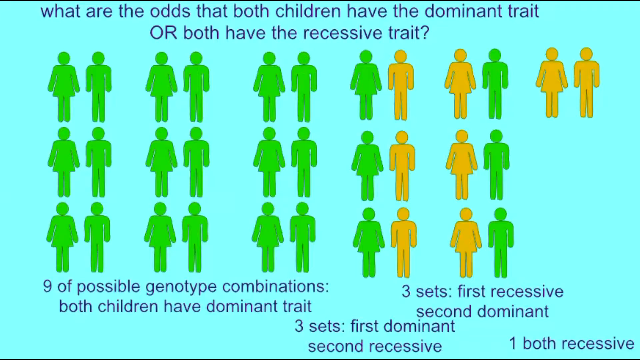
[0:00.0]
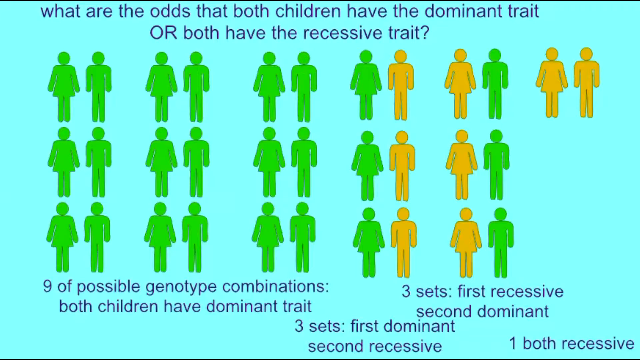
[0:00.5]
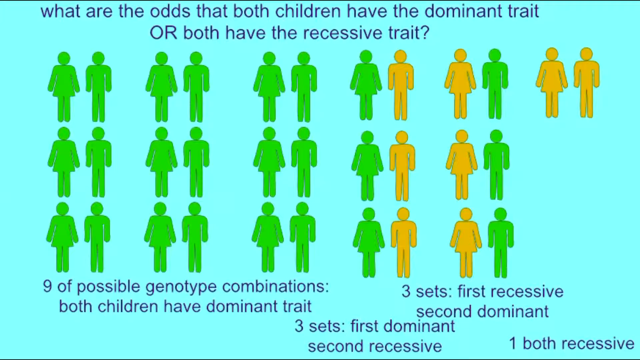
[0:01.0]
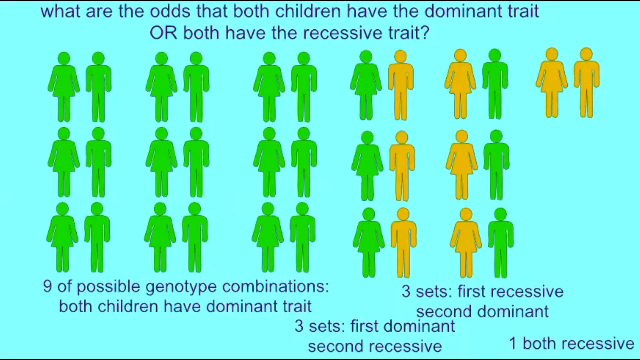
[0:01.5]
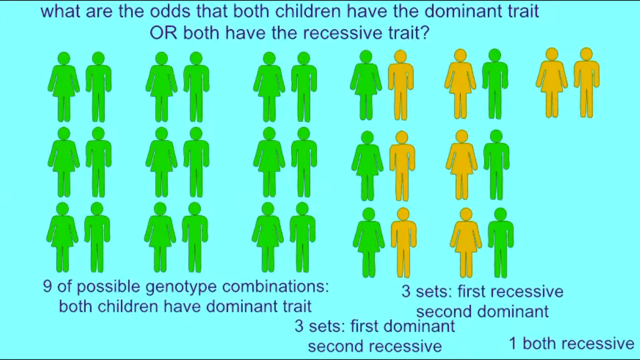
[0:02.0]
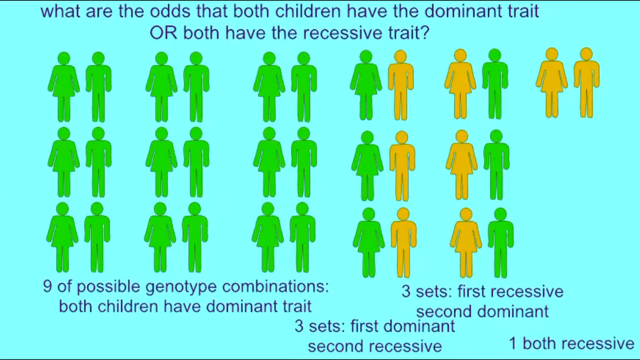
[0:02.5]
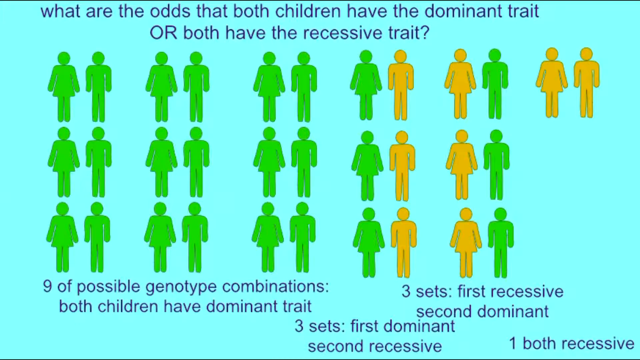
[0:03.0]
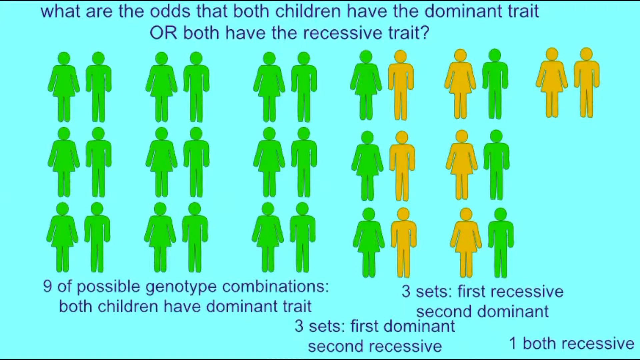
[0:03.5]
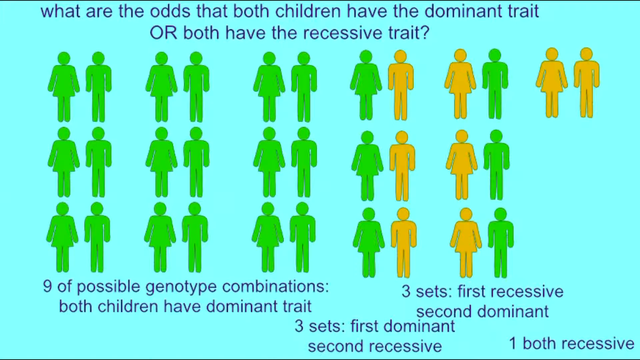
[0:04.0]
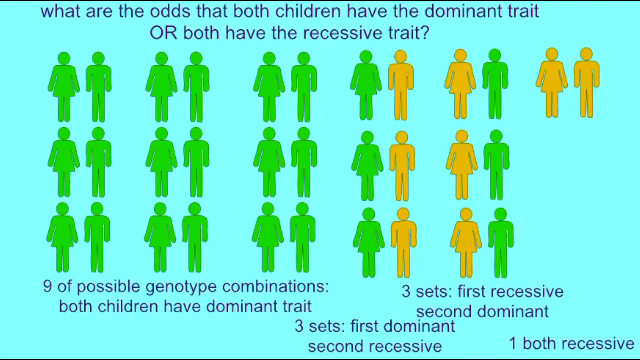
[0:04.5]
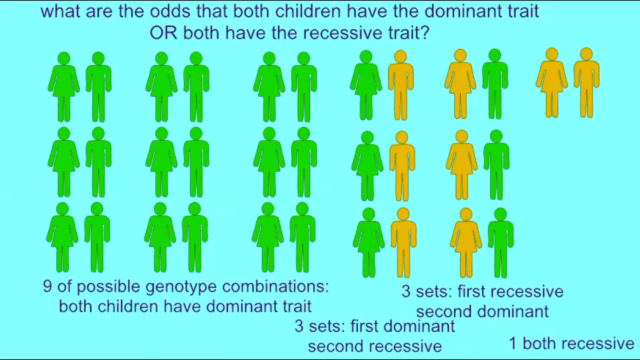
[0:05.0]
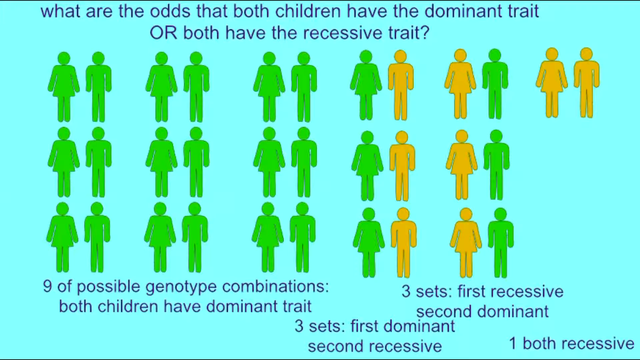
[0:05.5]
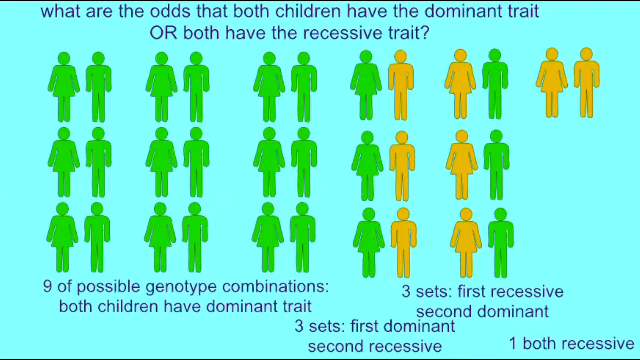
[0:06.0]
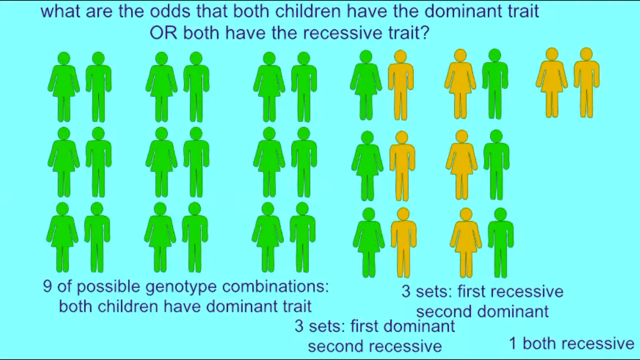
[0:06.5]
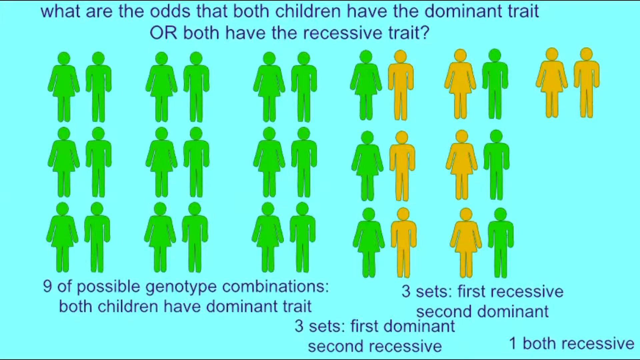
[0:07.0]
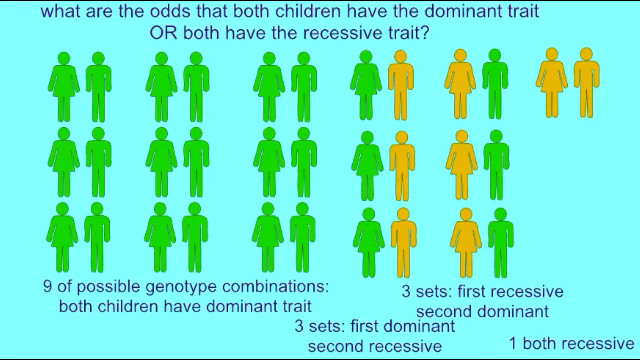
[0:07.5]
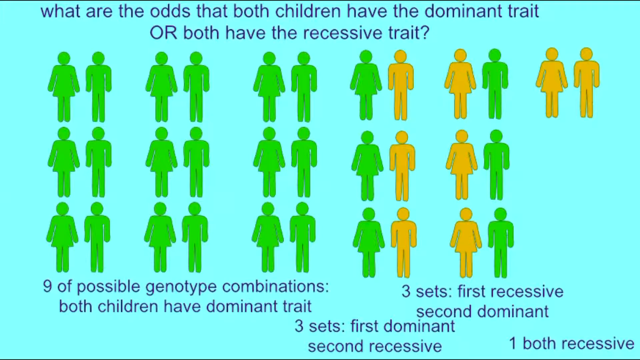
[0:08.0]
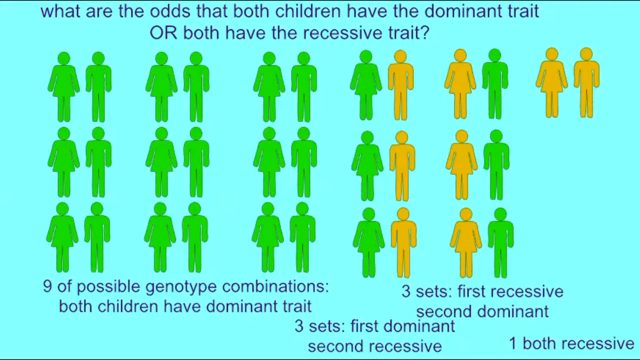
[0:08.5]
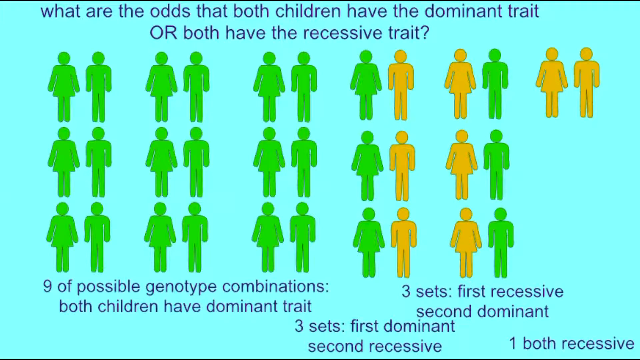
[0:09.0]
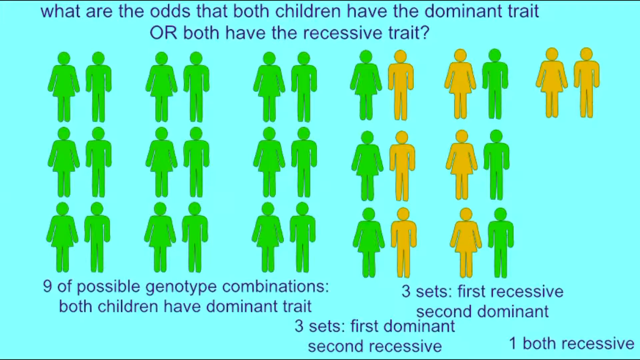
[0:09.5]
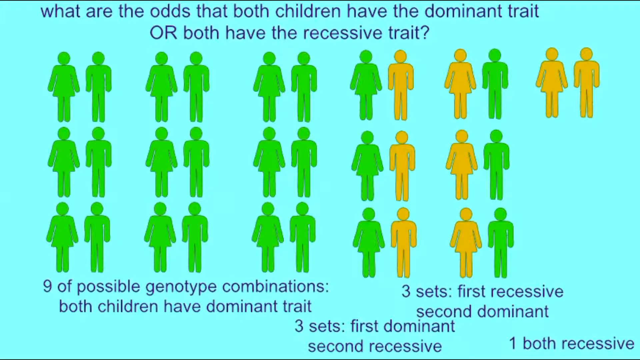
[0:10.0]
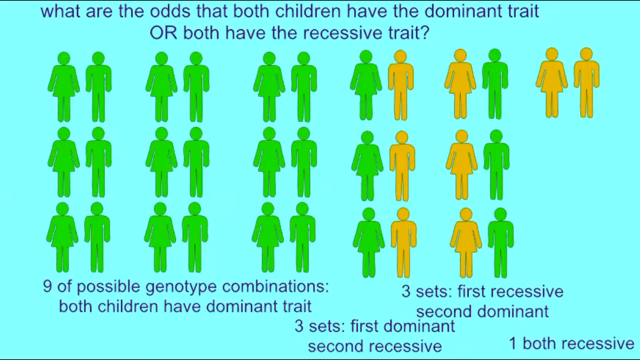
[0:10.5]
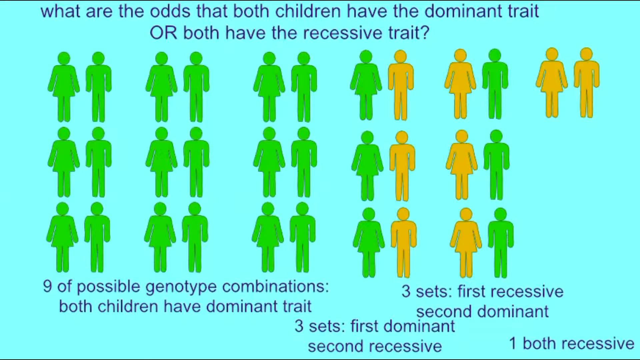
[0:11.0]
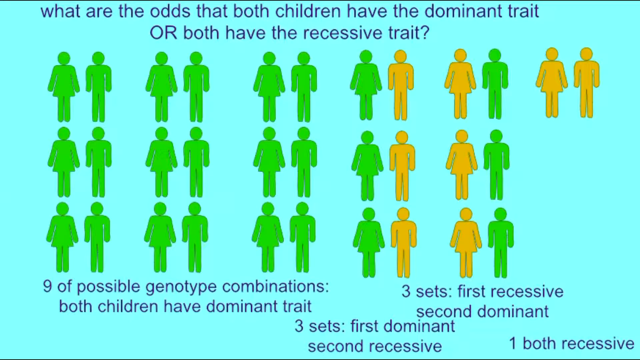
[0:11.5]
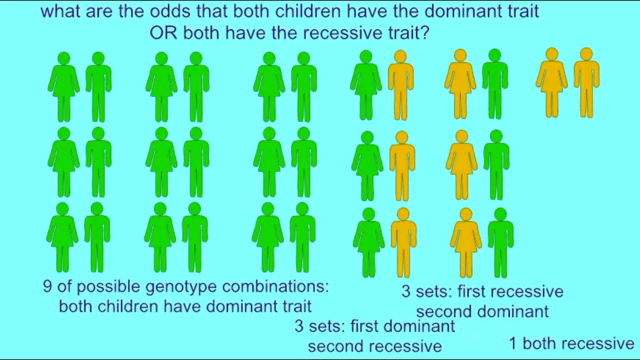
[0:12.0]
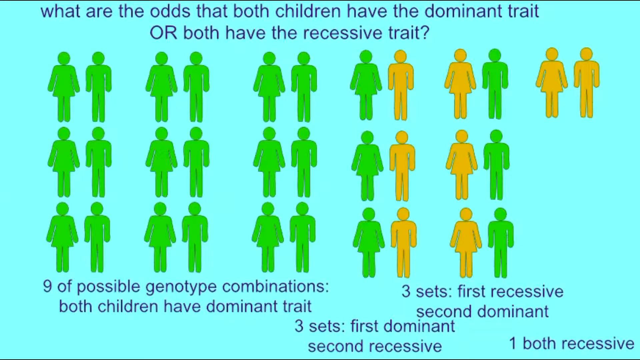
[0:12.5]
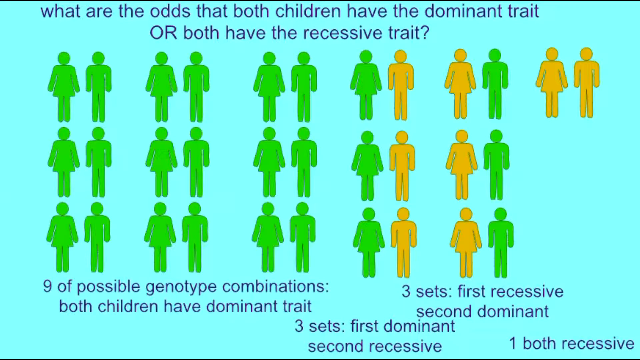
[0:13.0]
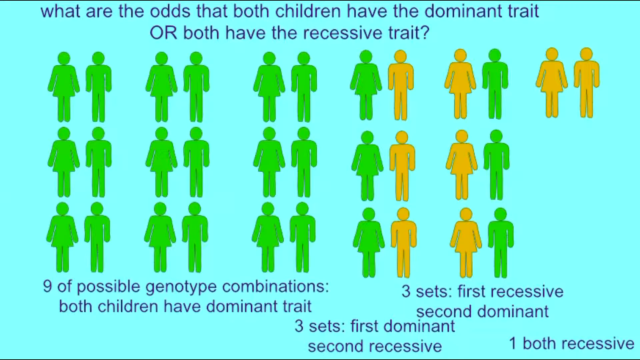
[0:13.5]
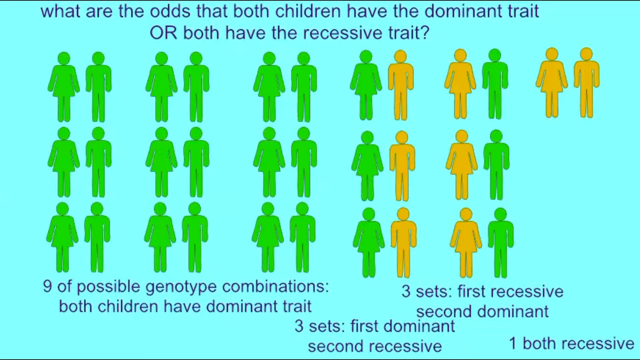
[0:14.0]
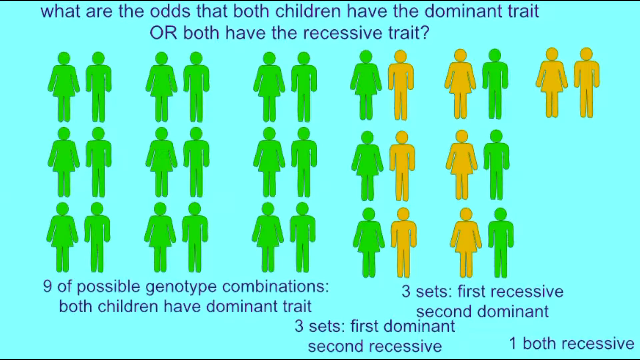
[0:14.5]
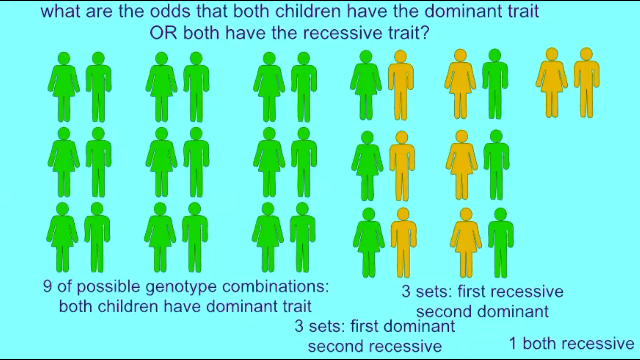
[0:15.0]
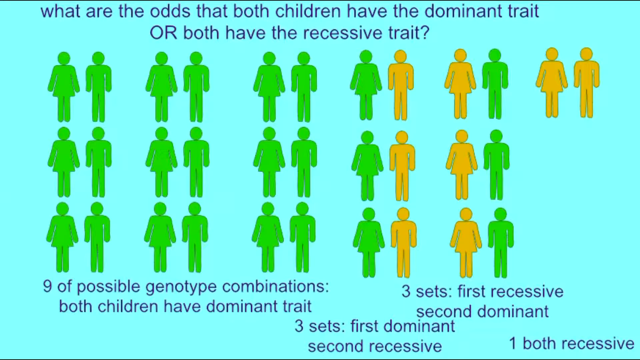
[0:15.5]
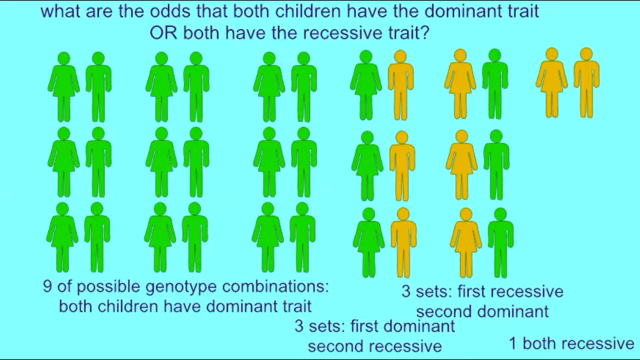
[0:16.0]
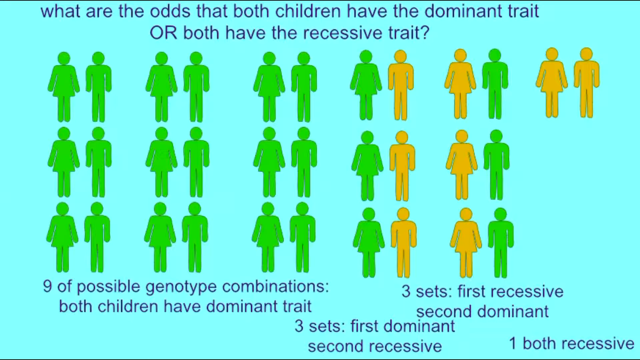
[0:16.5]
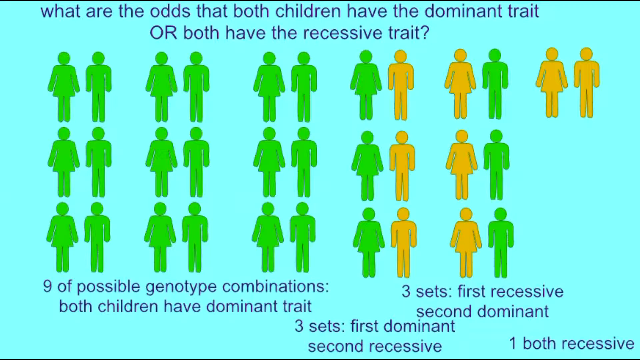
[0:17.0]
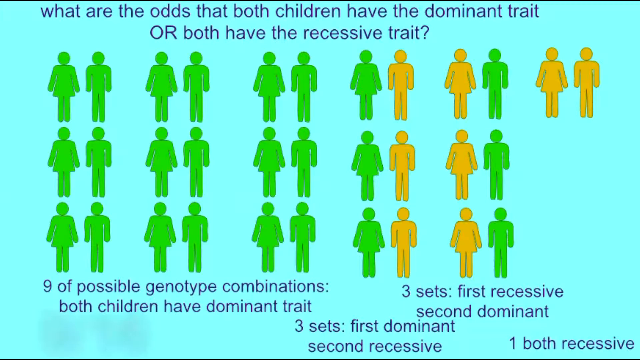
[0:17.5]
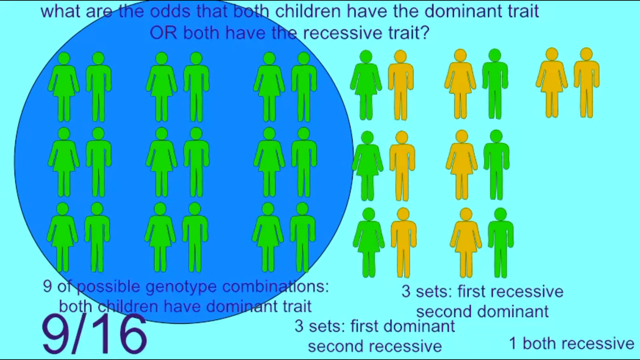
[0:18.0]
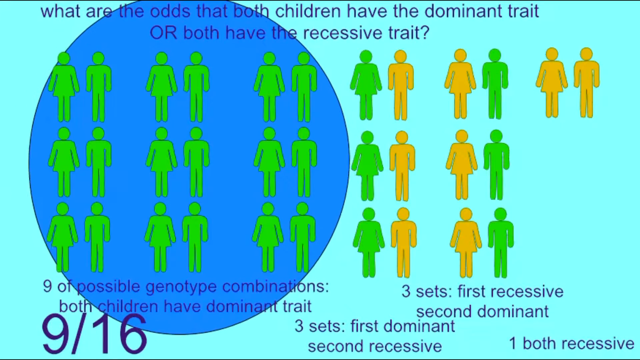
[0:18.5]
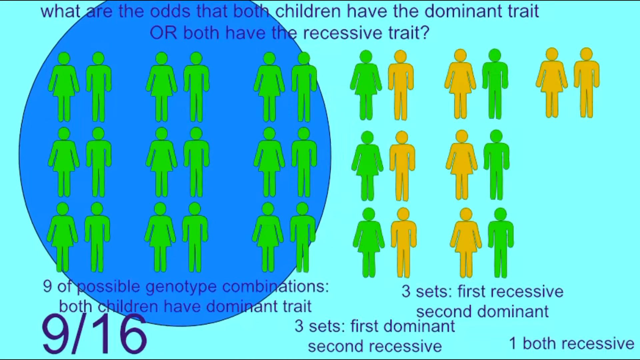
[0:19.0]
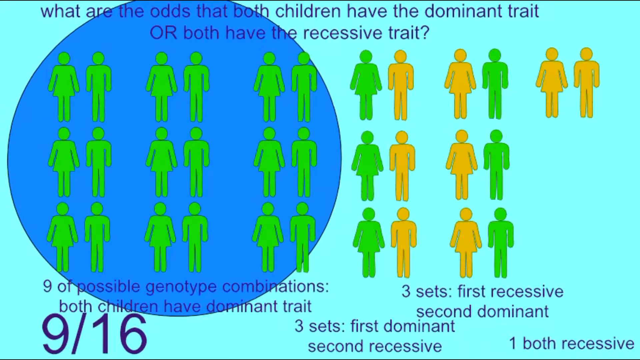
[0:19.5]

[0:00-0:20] The video is titled "what are the odds that both children have dominant trait or both have recessive traits?" and is a biology and genetics video, apparently made at a high school level. It shows nine of the possible genotype combinations in which both children have the dominant trait, three sets where the first receives recessive and the second dominant, three sets where the first is dominant and the second recessive, and one set where both are recessive, so nine out of 16 combinations have both children with dominant traits. A big blue circle is drawn around the nine genotype combinations where both children have dominant traits. The figures are like bathroom signs, the typical male and female symbols used to represent those genders.